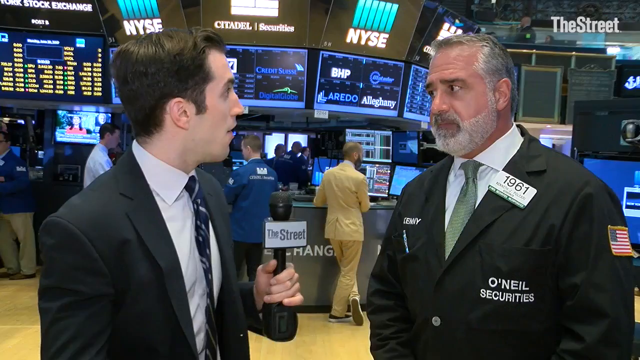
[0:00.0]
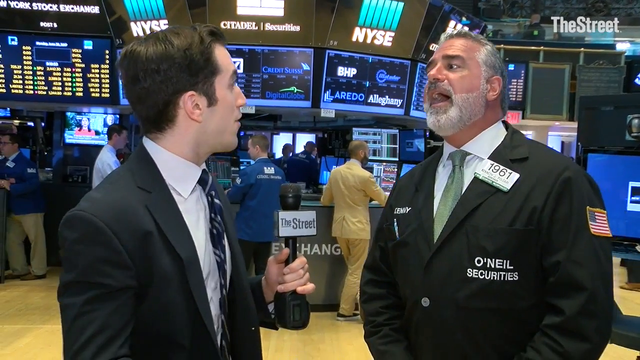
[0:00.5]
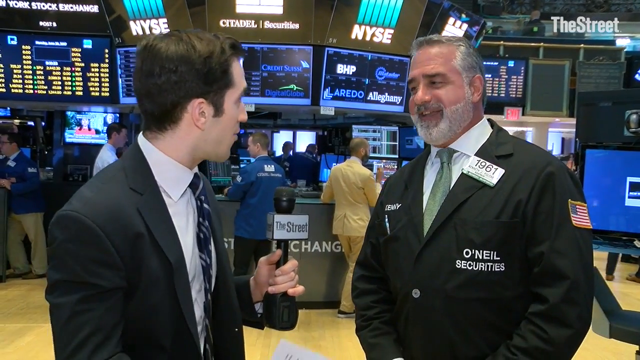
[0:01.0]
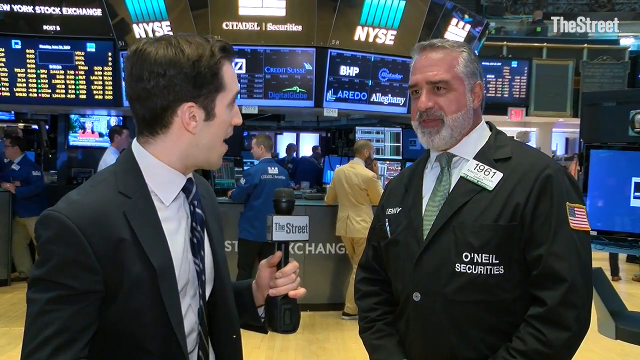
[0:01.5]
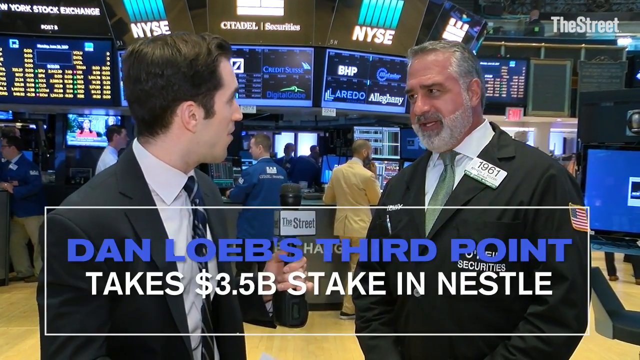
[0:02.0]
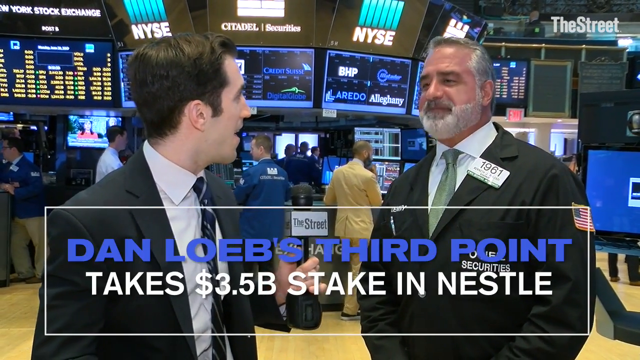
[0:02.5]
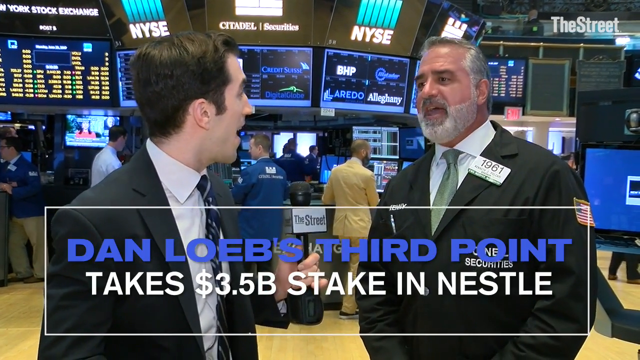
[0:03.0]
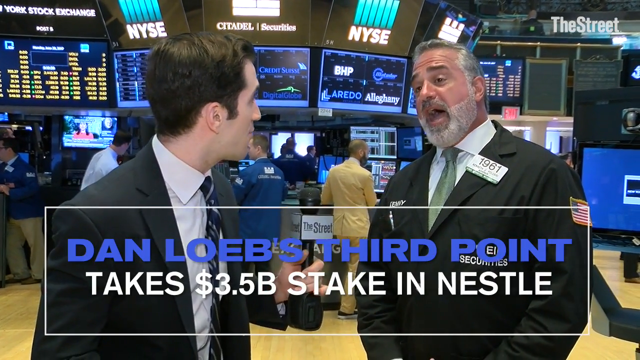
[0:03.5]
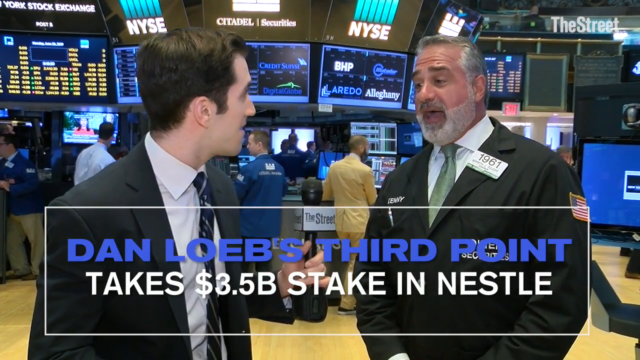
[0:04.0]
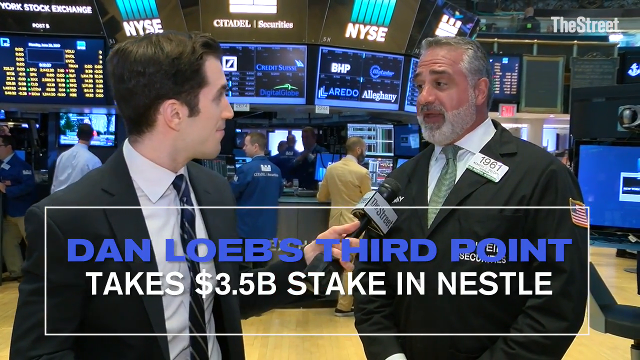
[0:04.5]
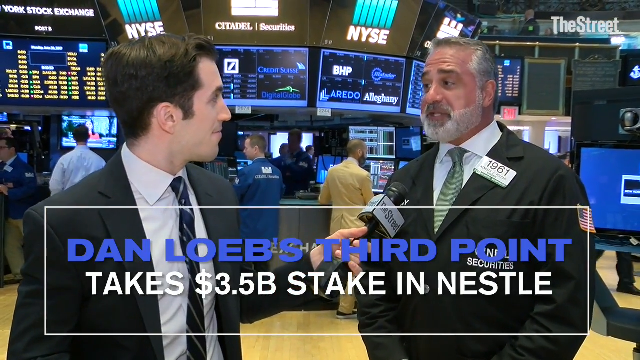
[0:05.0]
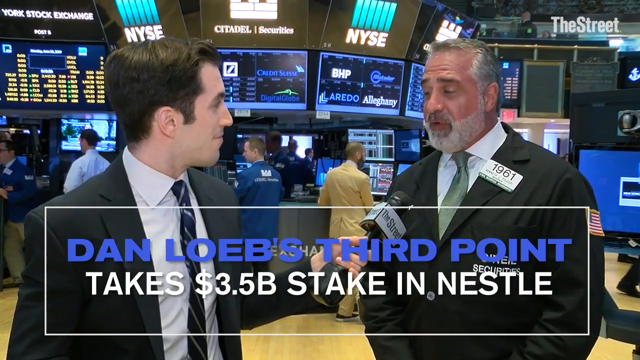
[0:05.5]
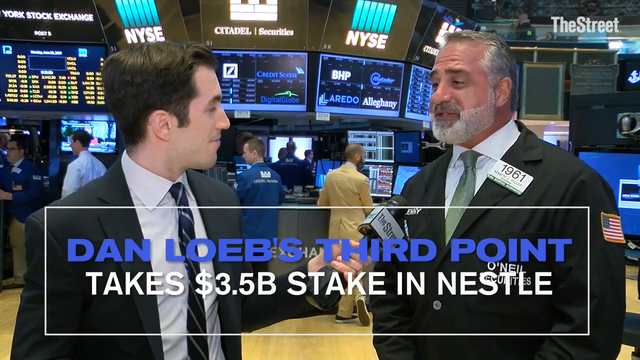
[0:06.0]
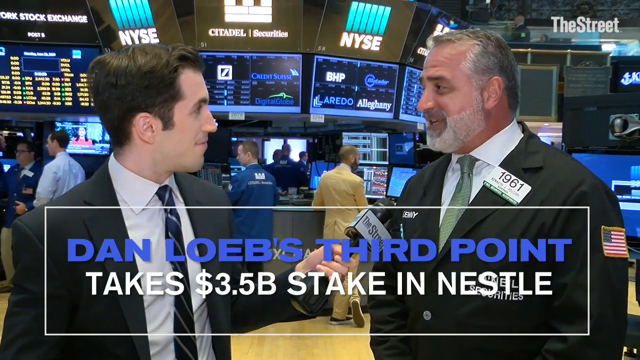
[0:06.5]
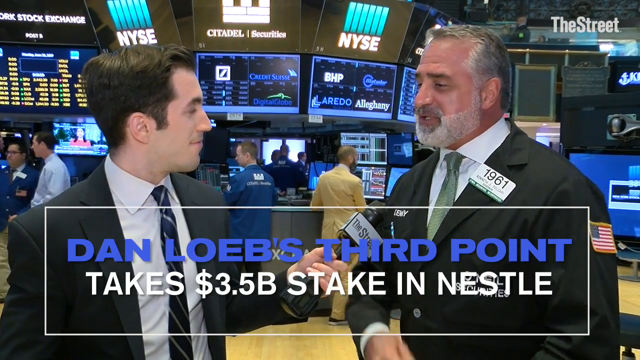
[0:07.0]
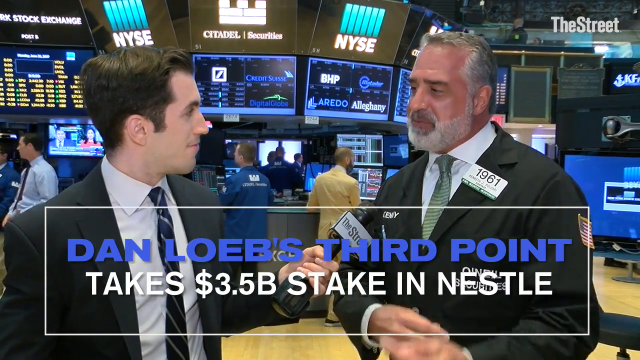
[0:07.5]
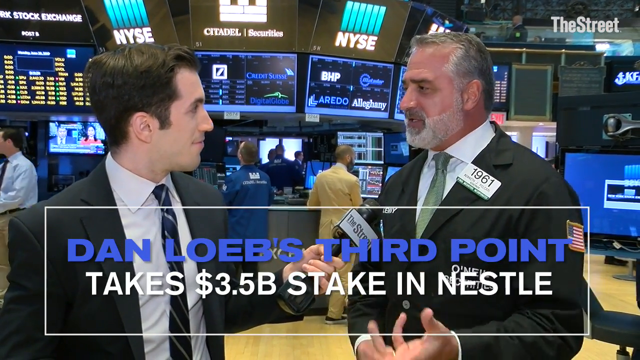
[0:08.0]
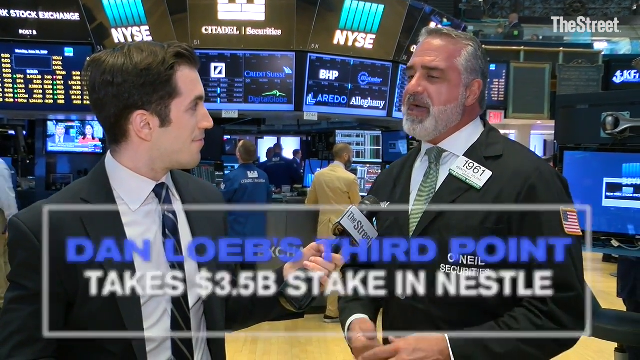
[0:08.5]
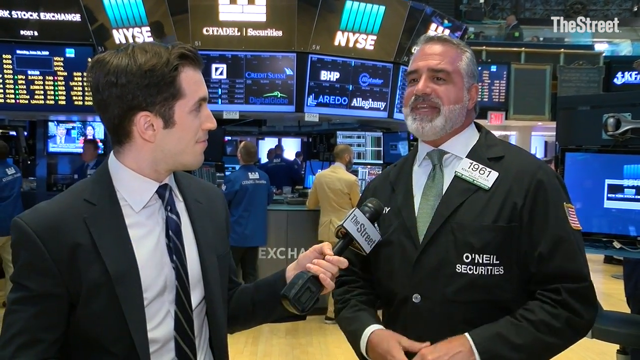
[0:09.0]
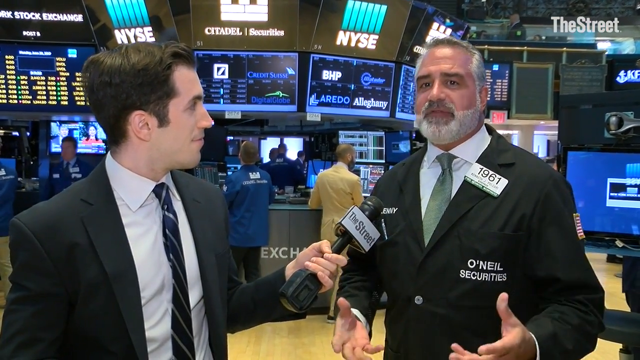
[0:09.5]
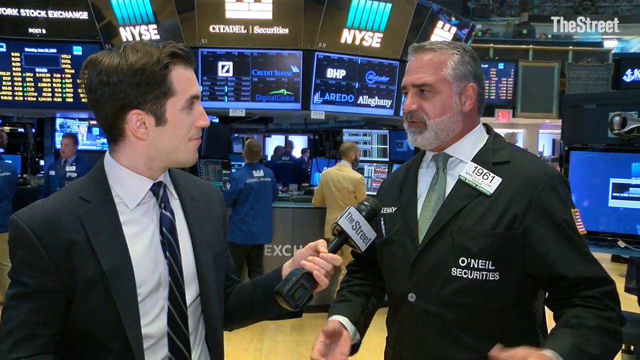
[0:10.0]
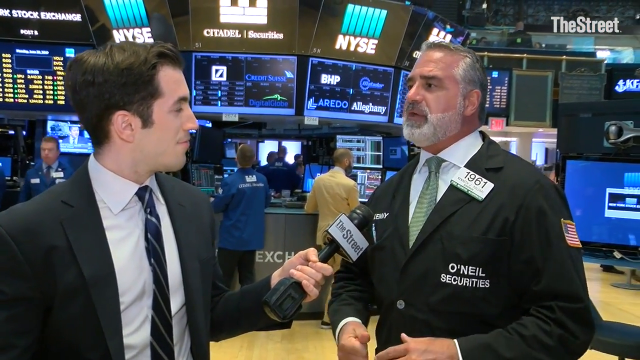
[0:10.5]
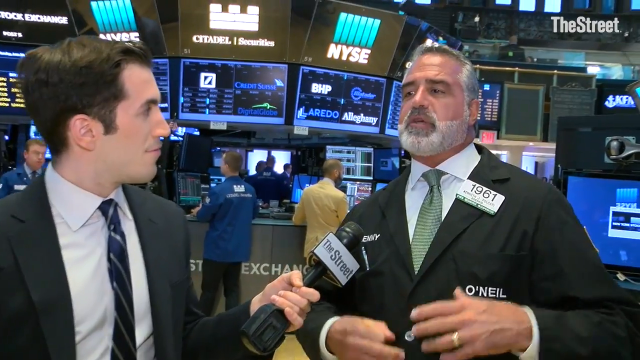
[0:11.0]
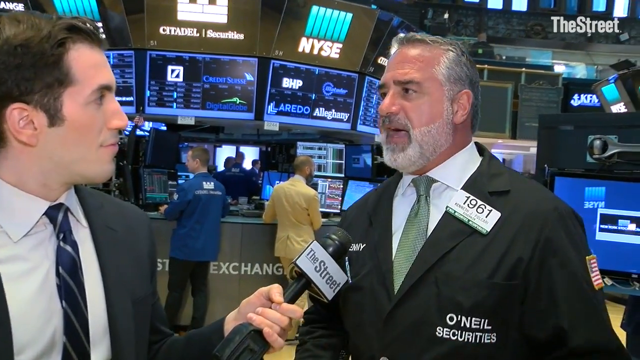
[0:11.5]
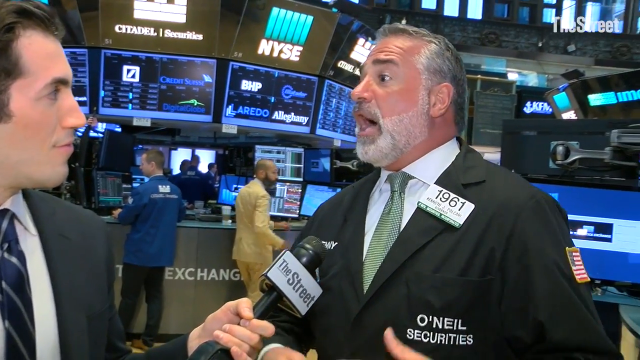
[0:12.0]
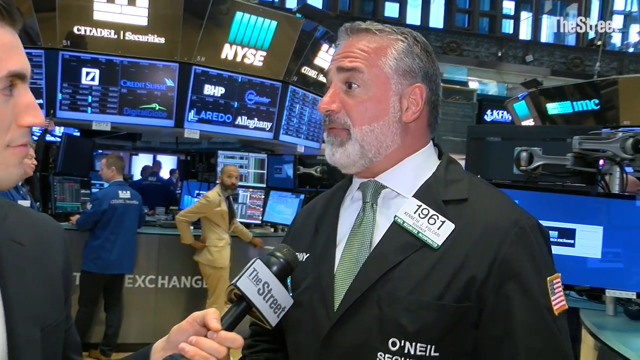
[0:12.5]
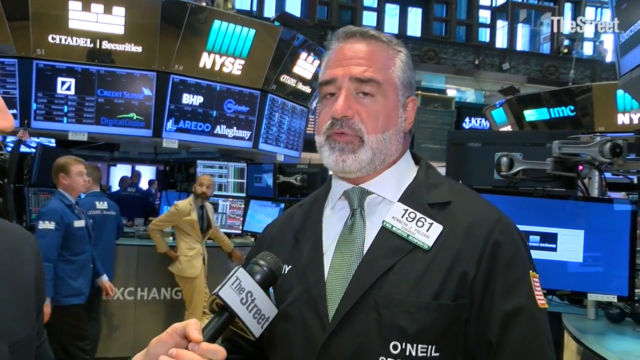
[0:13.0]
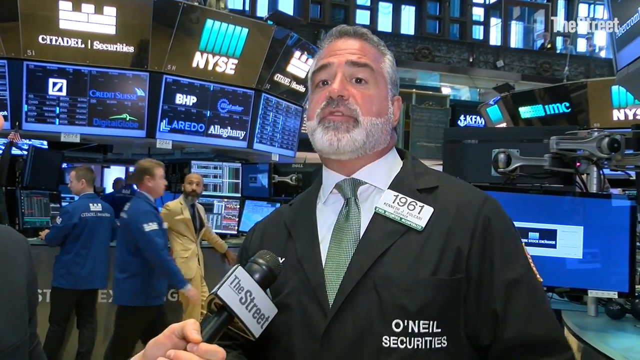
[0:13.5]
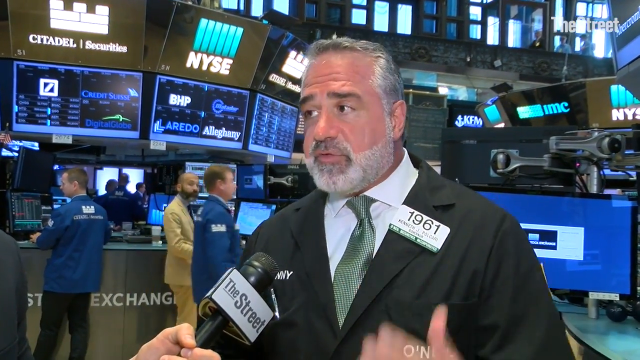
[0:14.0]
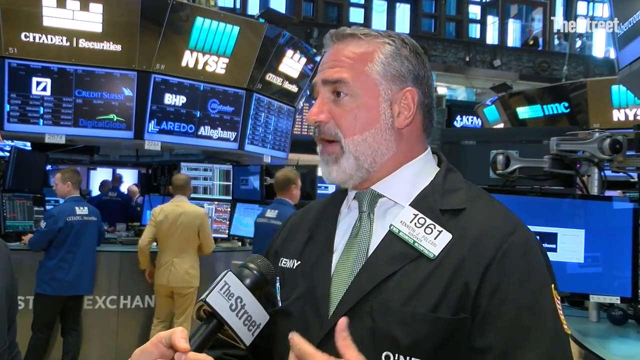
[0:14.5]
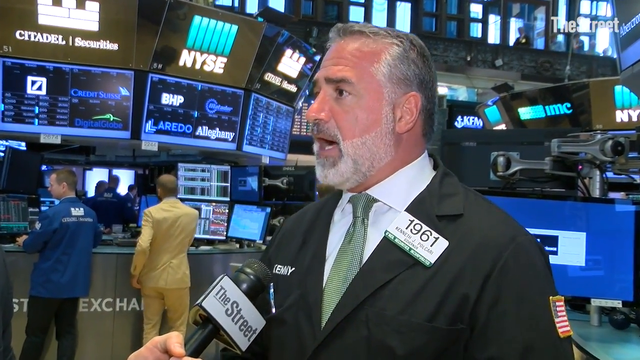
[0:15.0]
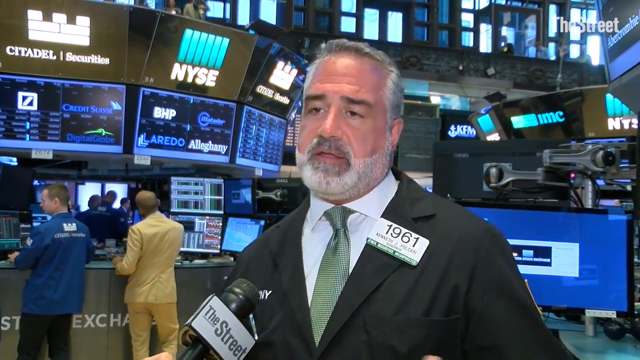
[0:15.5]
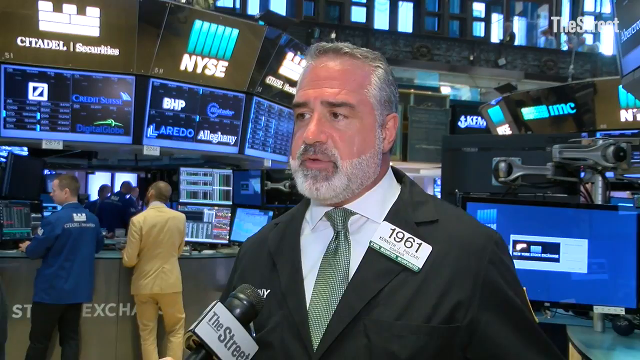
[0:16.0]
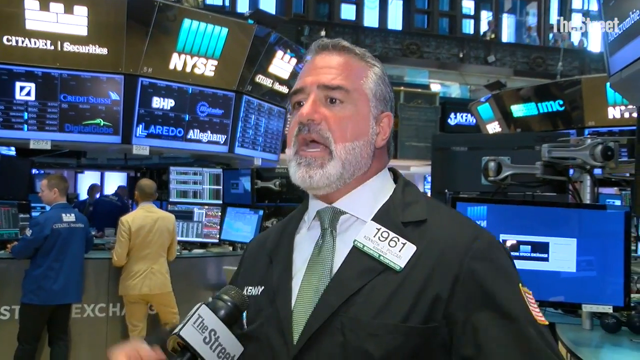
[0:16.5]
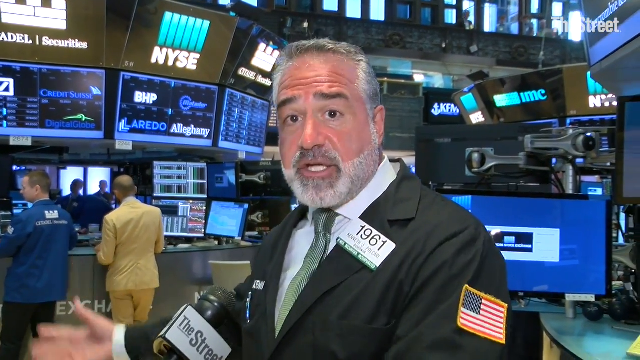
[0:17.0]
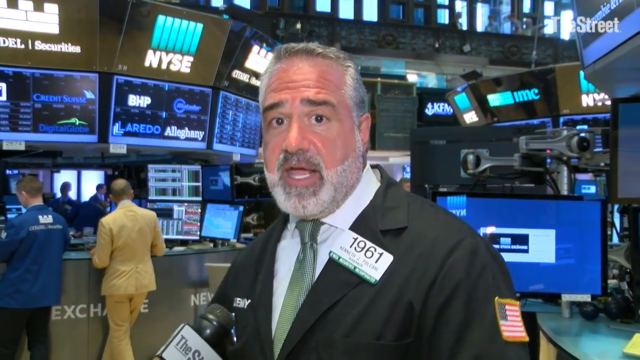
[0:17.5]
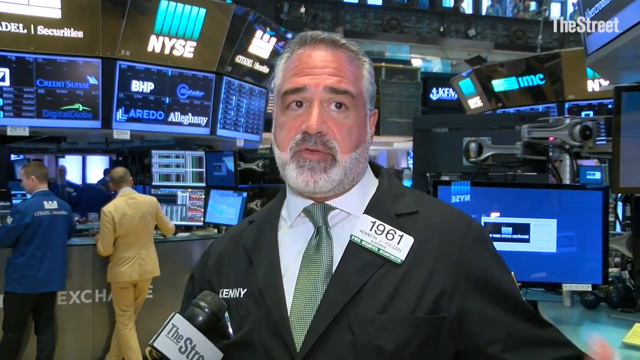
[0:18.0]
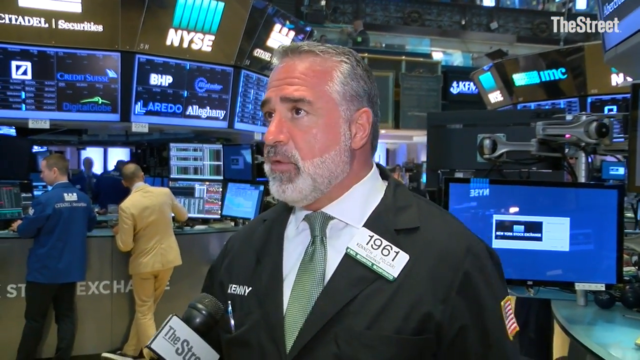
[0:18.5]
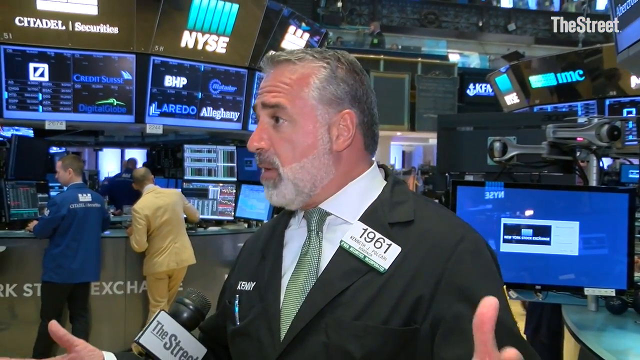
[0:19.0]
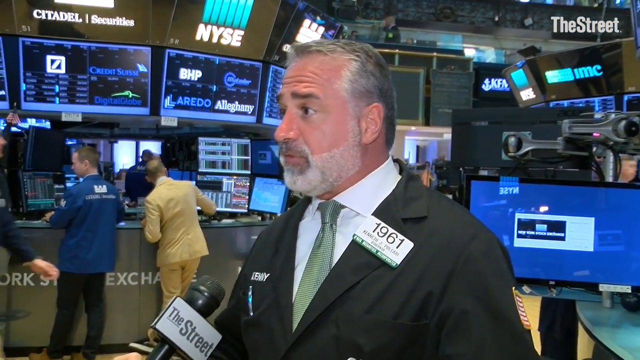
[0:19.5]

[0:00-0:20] The setting appears to be the New York Stock Exchange: in the back there are many big screens showing text such as "NYSE" and "Citadel Securities," and the New York Stock Exchange is visible in the background. What seems to be a reporter from the street is talking to a man who works on the Stock Exchange floor and who seems to be part of the O'Neill Securities team. They appear to be discussing Dan Loeb's Third Point taking a 3.5 billion stake in Nestle. The man being interviewed seems to be named Kenny. Everyone wears very professional business attire, with suits and ties. The man talking to the reporter has an identification on his shirt reading "1961," apparently an identification number.